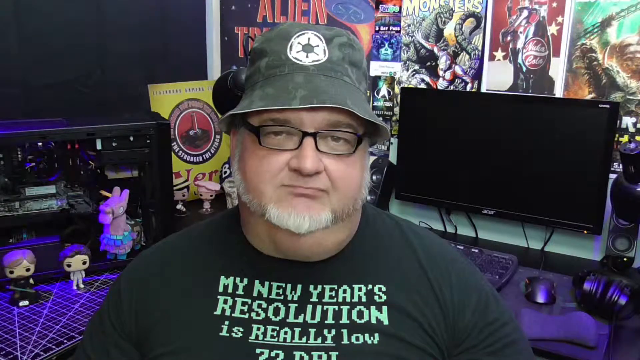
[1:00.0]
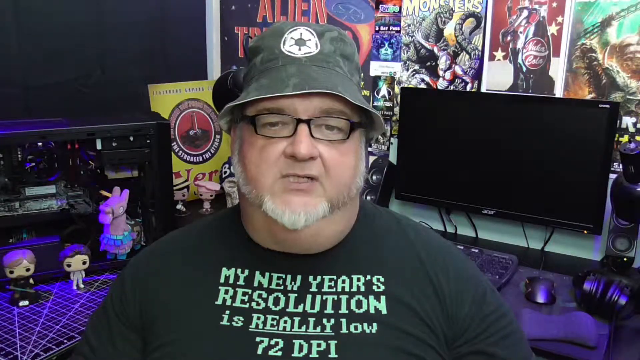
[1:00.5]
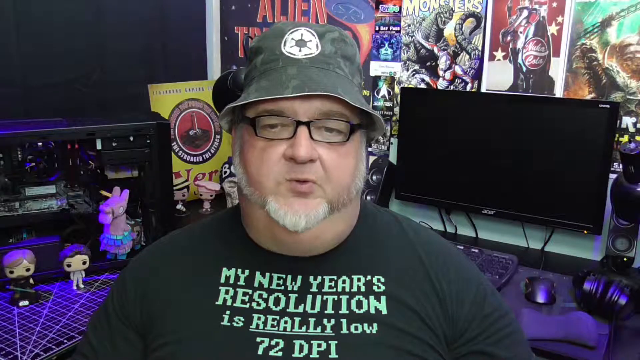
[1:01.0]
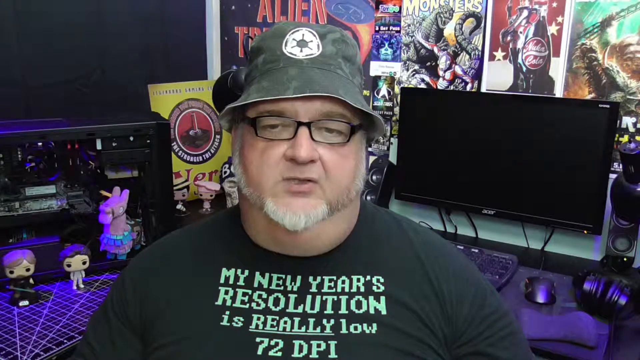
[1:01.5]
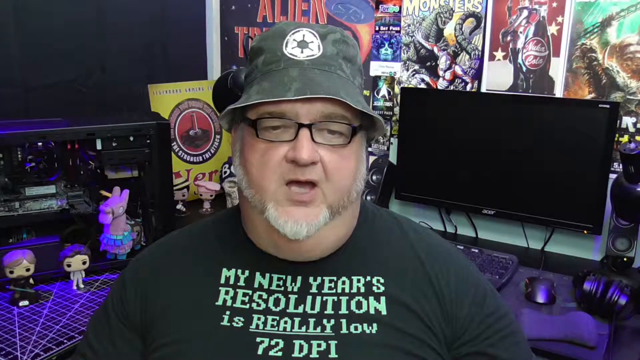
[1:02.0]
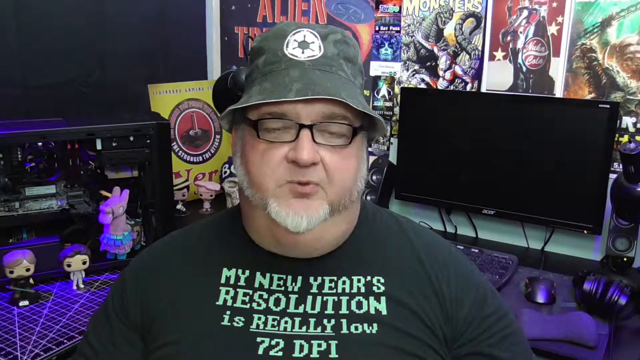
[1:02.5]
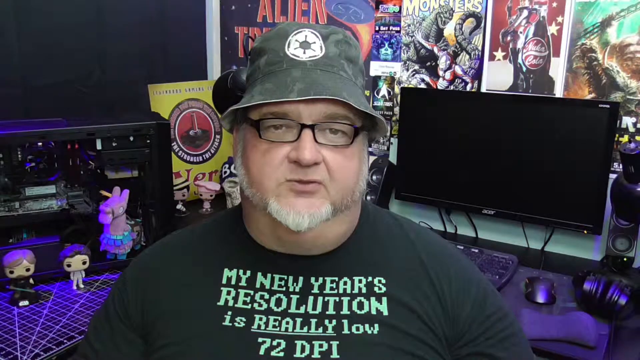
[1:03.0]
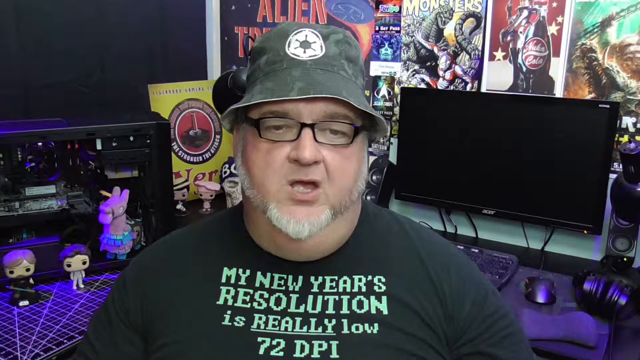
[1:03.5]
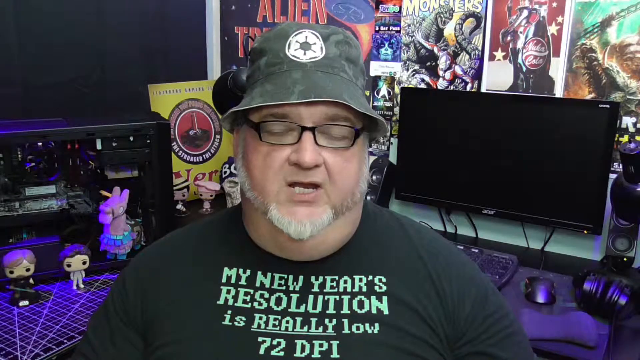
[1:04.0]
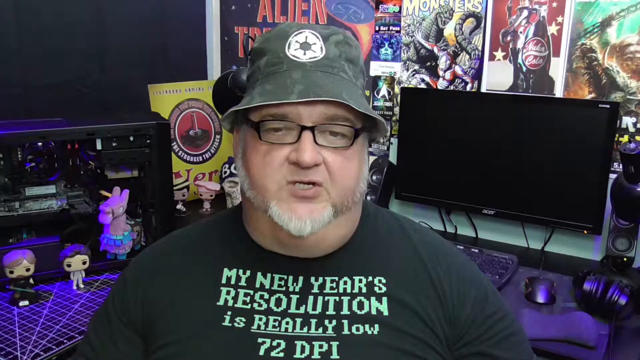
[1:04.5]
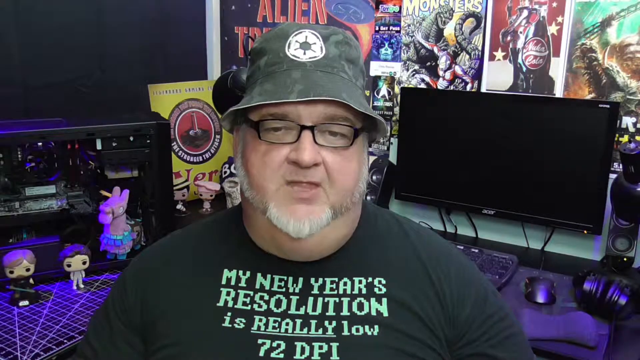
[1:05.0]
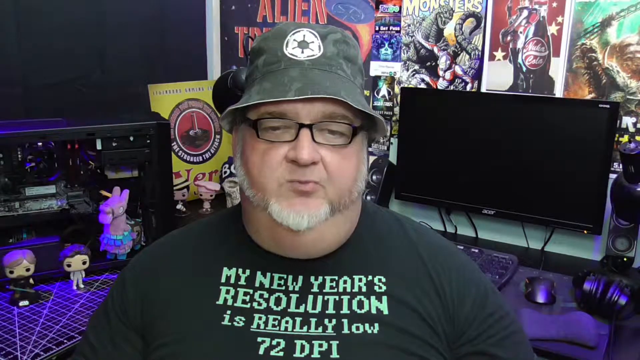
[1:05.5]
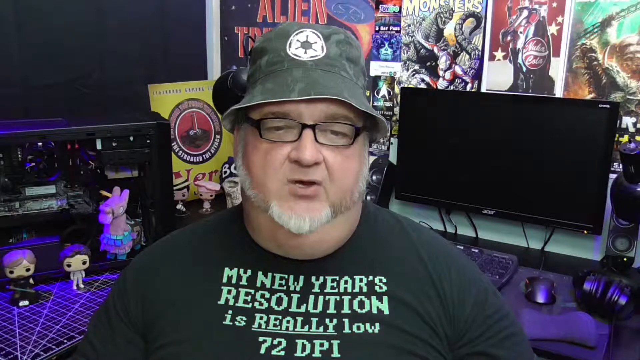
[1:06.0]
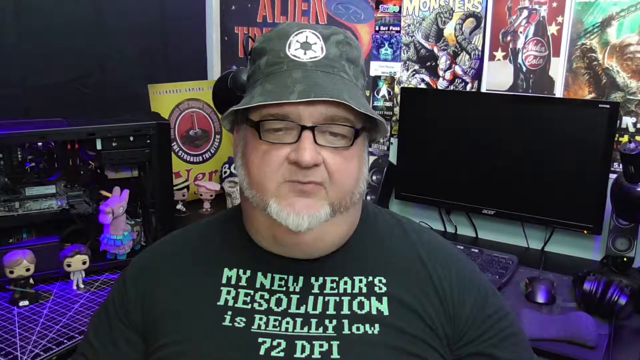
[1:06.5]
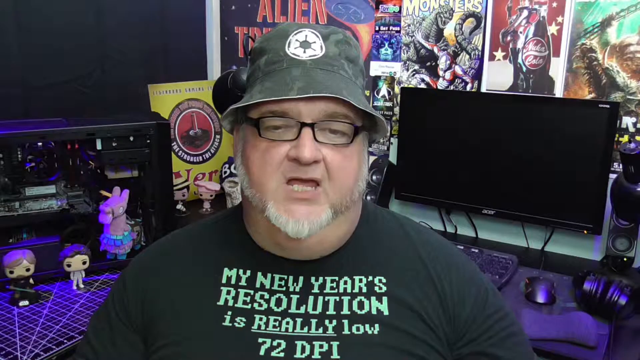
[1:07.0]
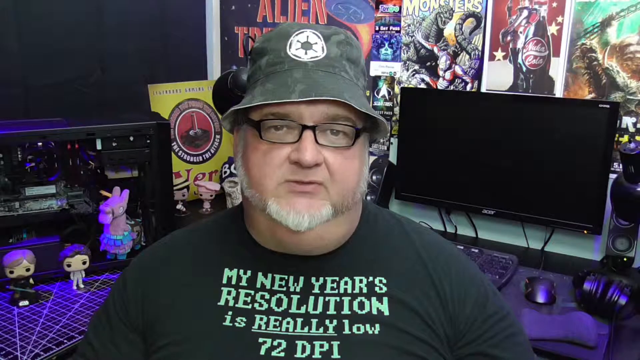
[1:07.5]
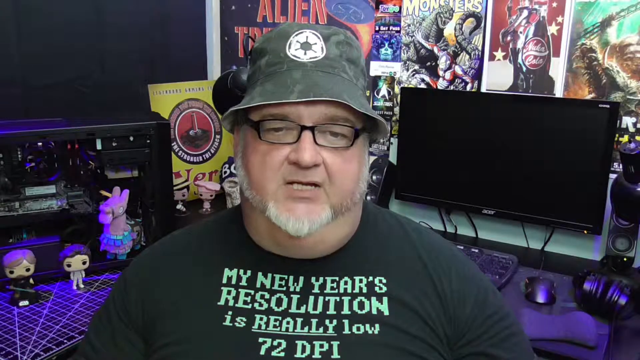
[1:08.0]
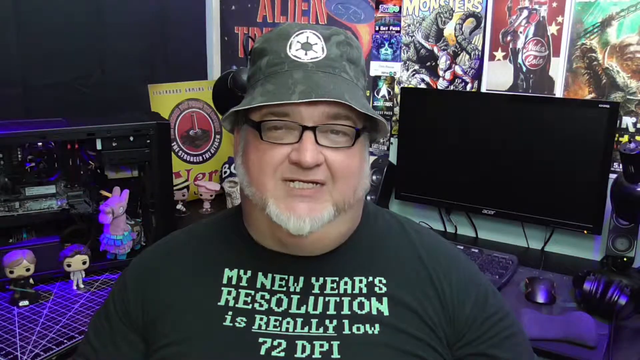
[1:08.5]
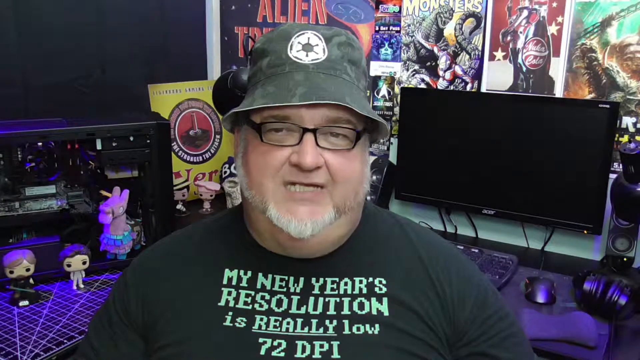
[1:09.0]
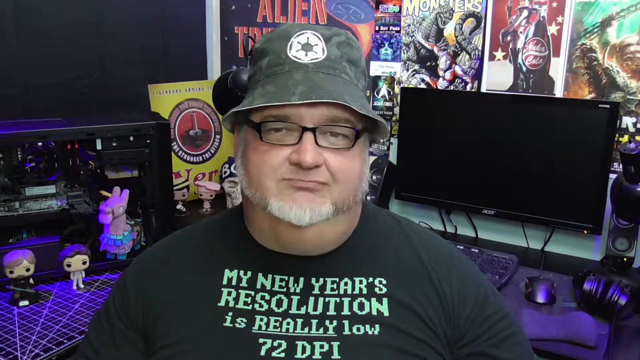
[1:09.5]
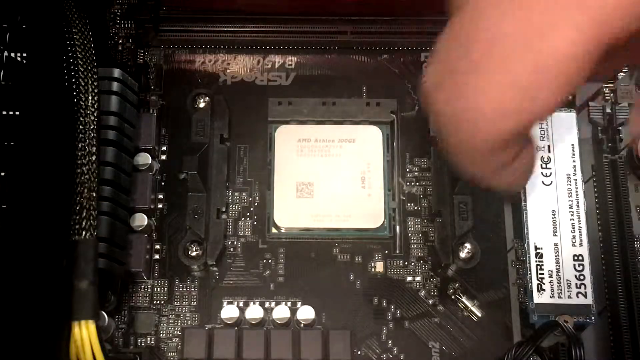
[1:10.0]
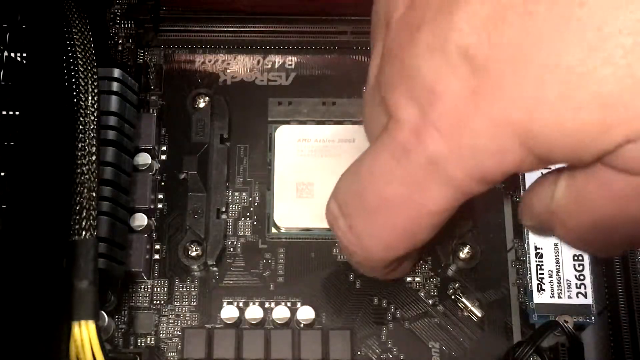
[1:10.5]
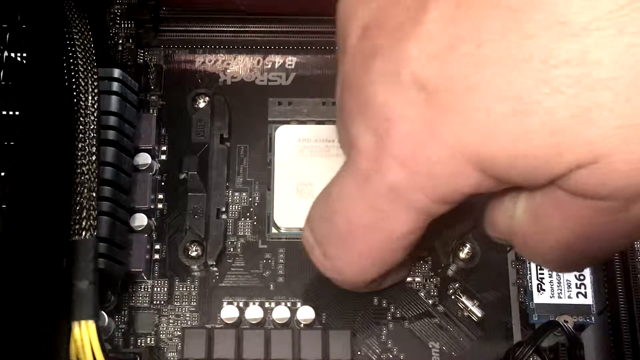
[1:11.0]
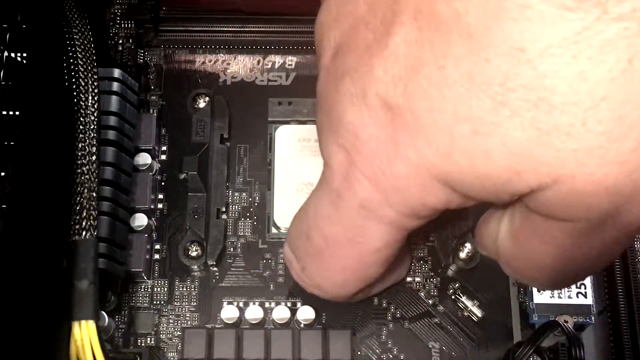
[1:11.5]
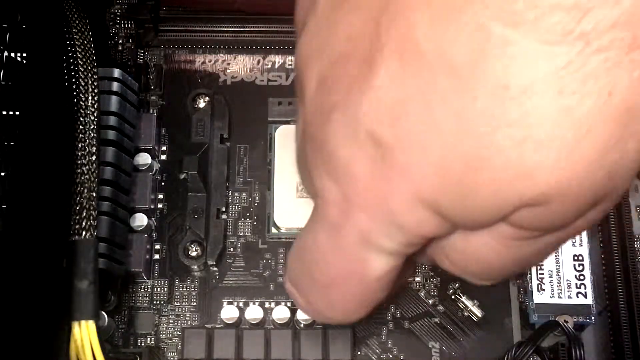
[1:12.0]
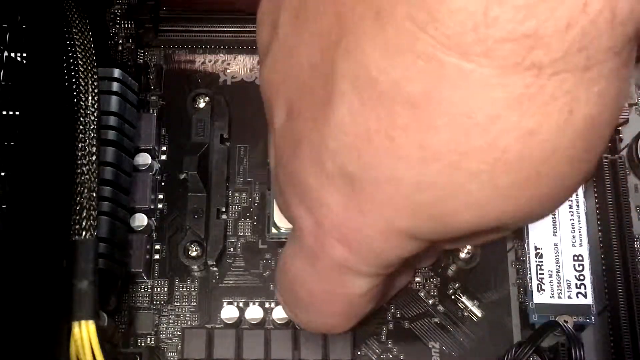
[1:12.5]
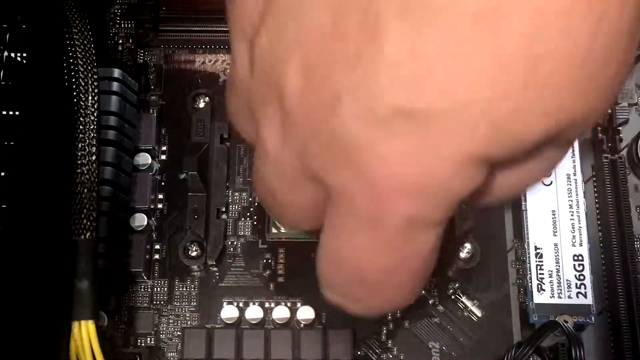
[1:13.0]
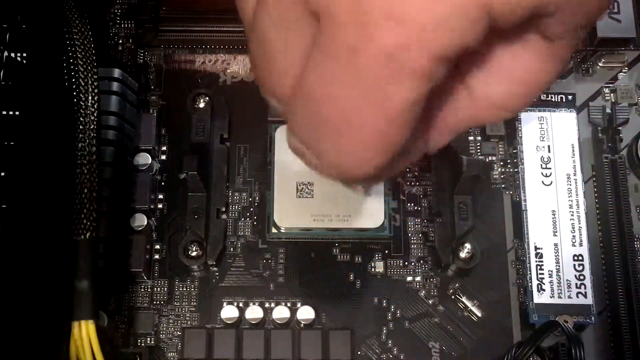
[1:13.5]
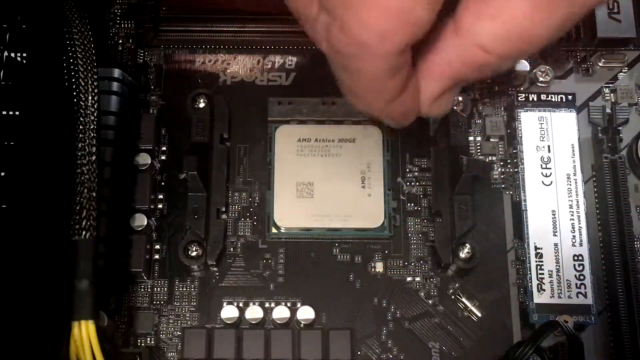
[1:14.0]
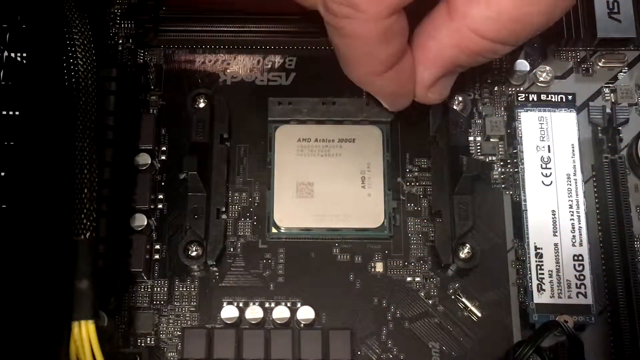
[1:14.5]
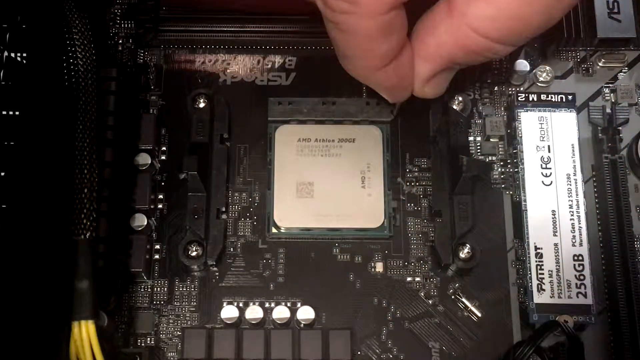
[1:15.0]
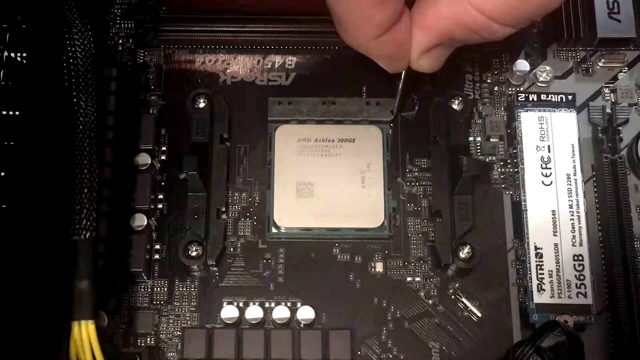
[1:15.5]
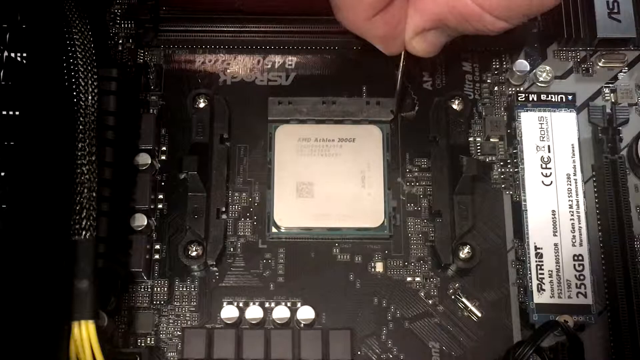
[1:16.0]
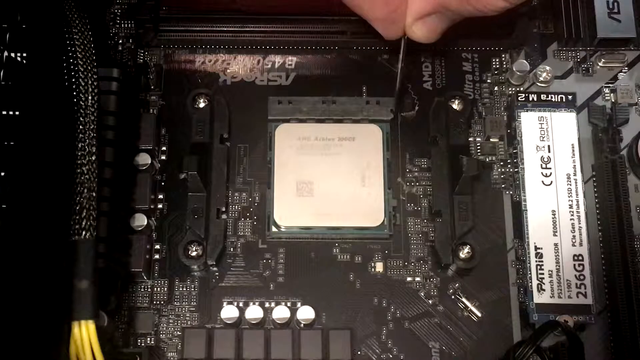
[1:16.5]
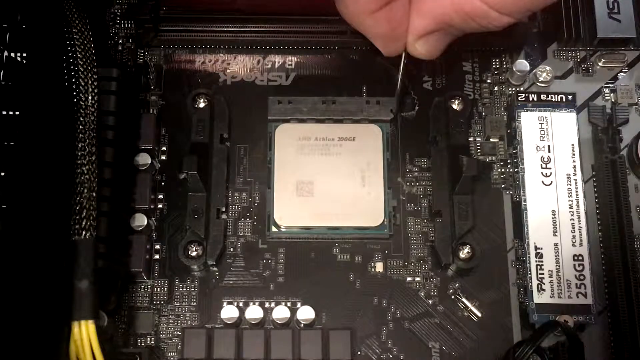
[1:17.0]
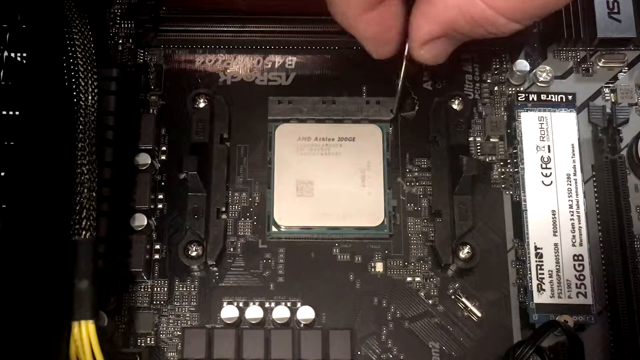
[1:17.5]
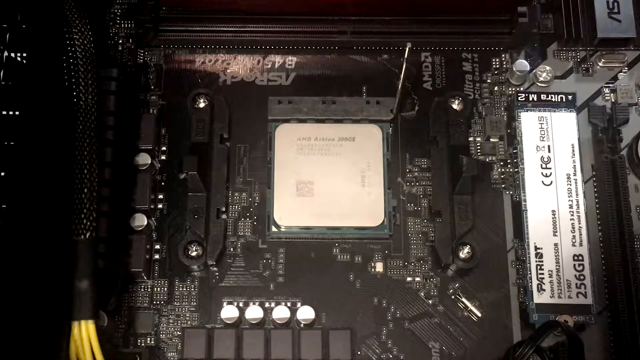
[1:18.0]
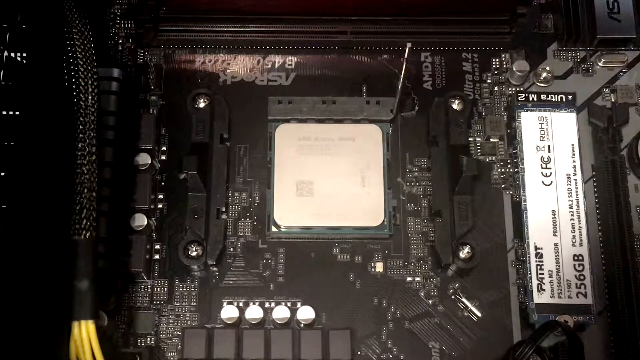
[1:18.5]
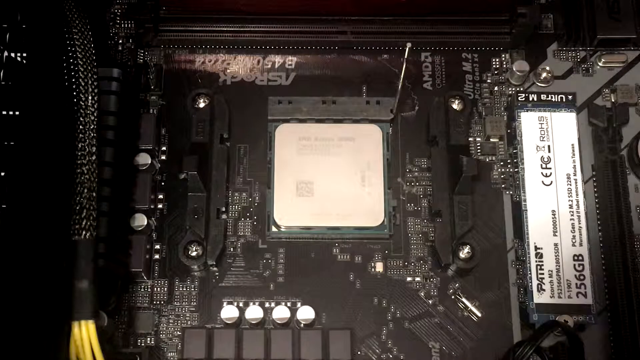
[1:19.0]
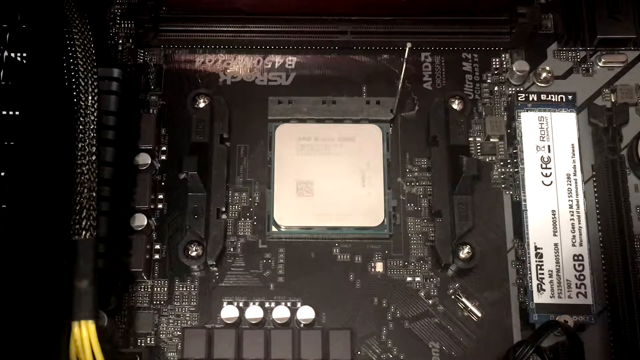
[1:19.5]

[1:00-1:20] The man talks while seeming to read a script with his eyes, moving his eyebrows. The video then cuts to what looks like a recording of a motherboard that seems to be already installed in a PC case, very close up on the CPU area. The man uses his right index finger to kind of move something around; he seems to be unclutching the CPU lock with his right index finger and thumb, moving it up. He then moves his hand away, leaving the CPU exposed and not locked in. On the CPU the letters A, M, T can be seen; the rest is hard to make out because of the video quality, but there seem to be more letters starting with an A and, at the end, something that says "200GE". The whole motherboard is black. An Ultra M.2 SSD is installed in the motherboard off to the right; there seems to be a Patriot SSD with 256GB Corsair M.2. Off to the right there also seems to be an empty RAM slot that is not filled in.